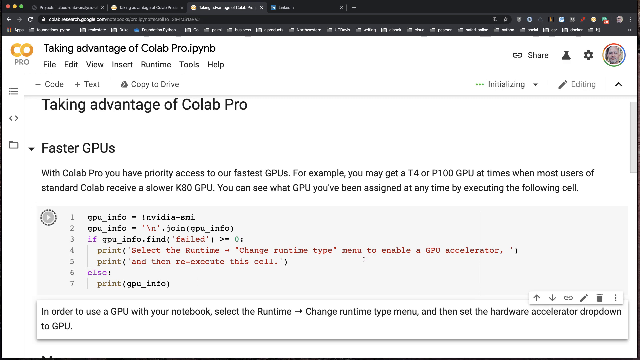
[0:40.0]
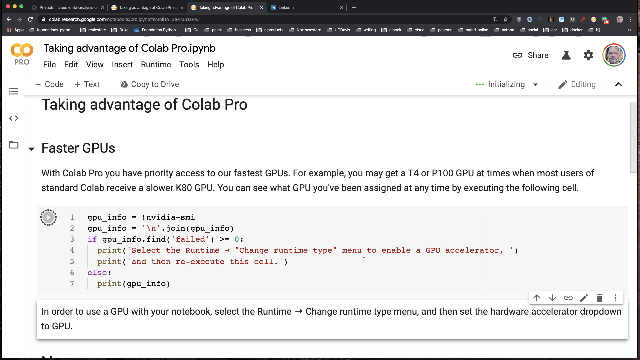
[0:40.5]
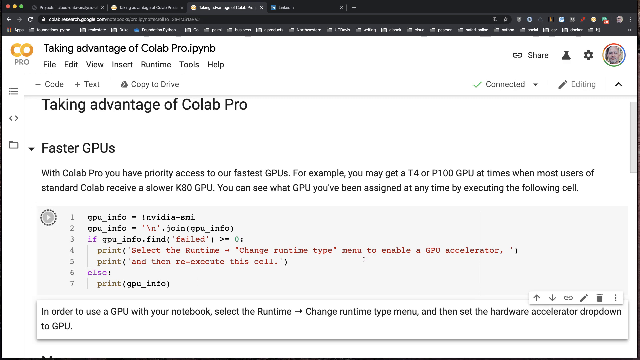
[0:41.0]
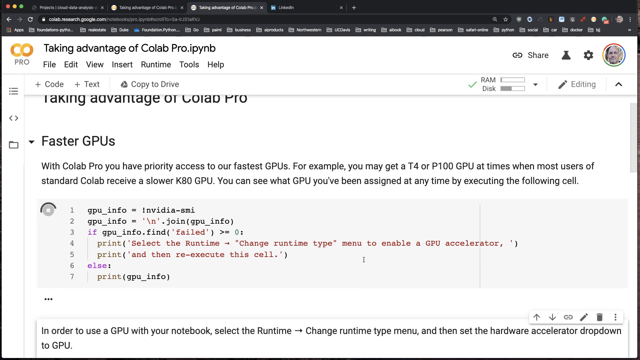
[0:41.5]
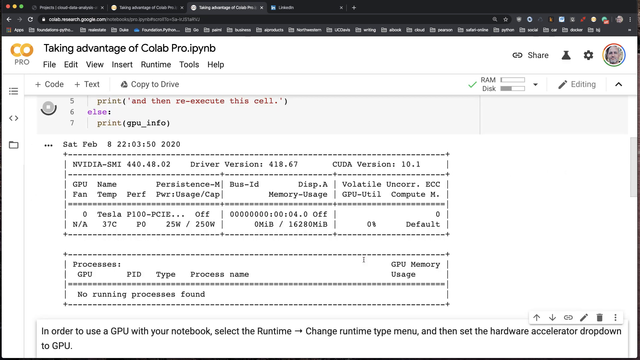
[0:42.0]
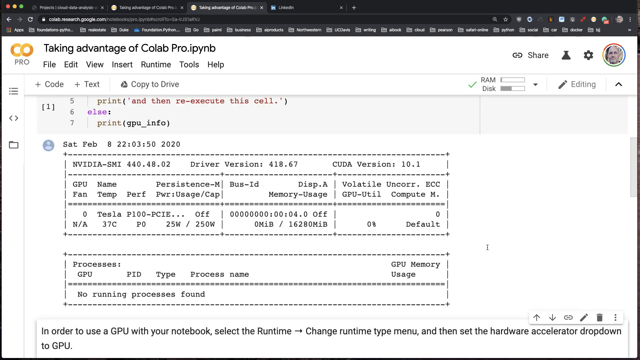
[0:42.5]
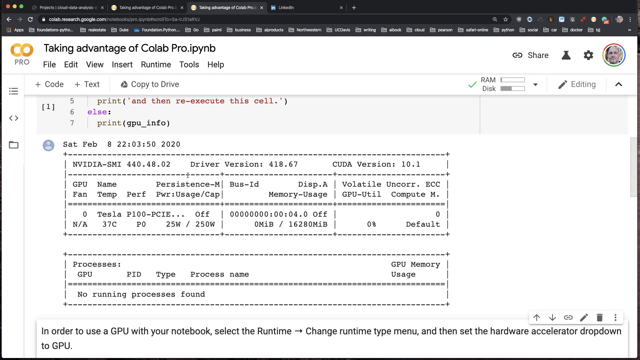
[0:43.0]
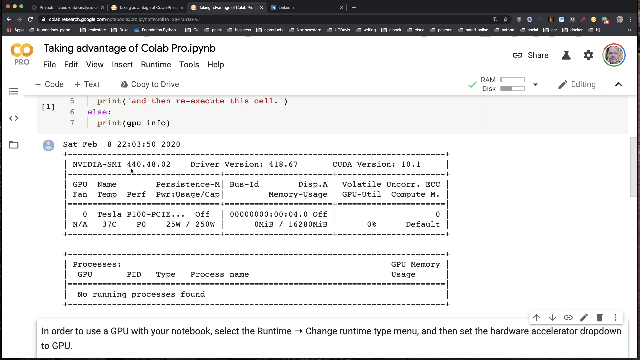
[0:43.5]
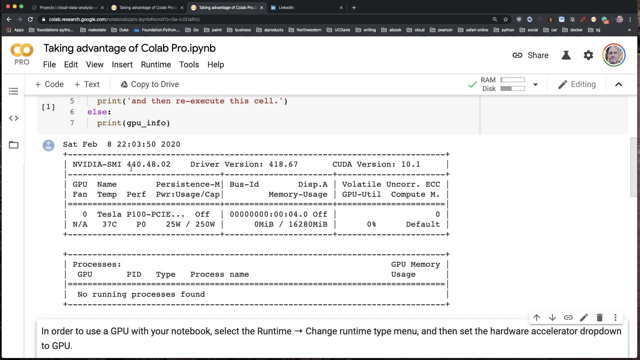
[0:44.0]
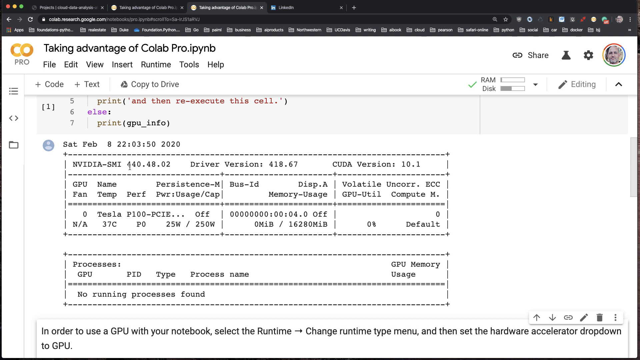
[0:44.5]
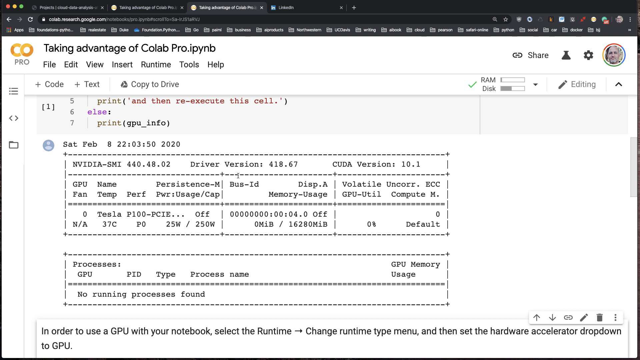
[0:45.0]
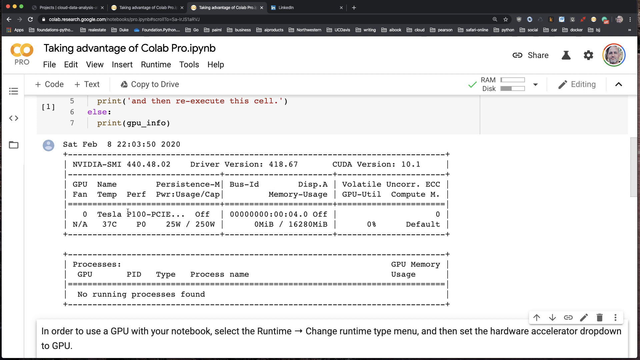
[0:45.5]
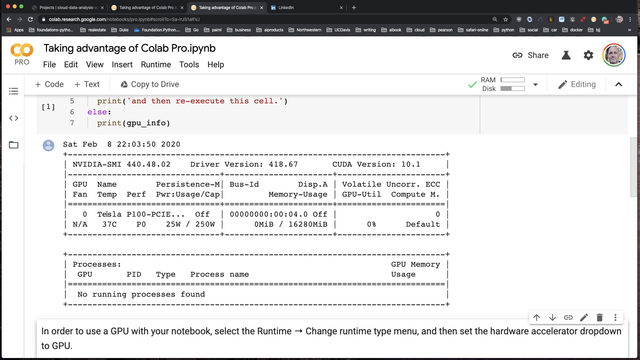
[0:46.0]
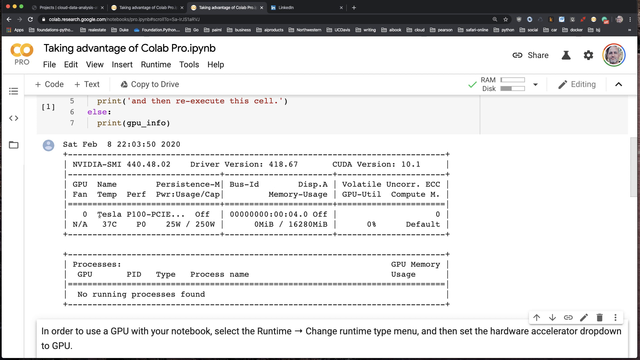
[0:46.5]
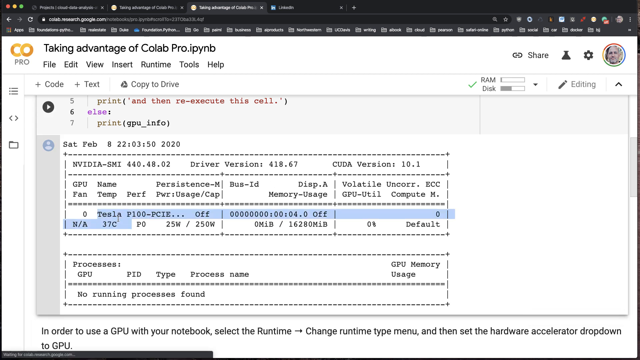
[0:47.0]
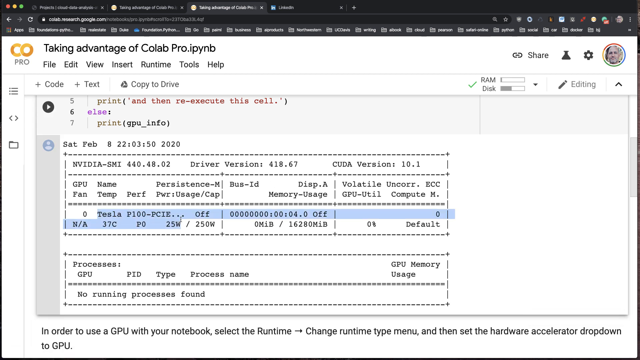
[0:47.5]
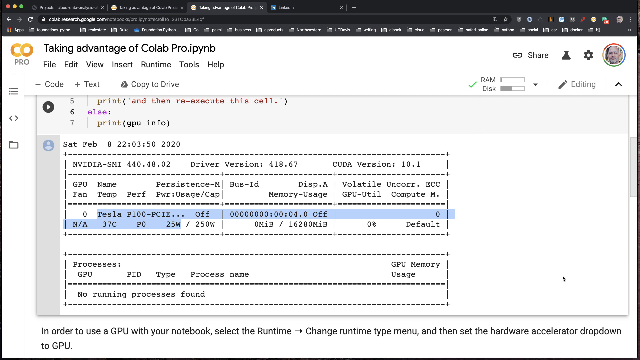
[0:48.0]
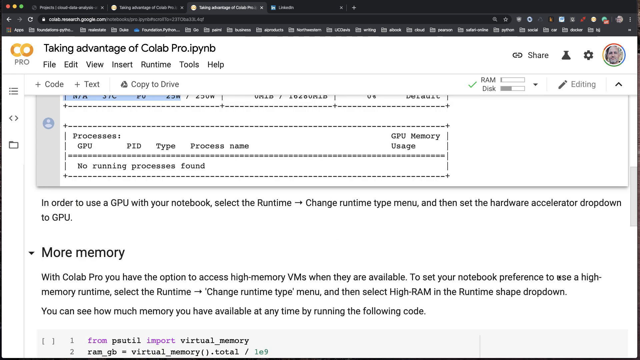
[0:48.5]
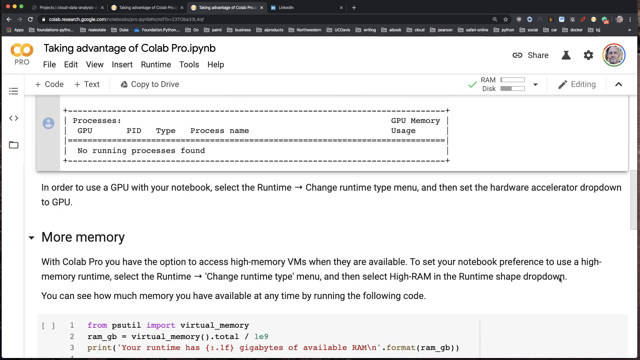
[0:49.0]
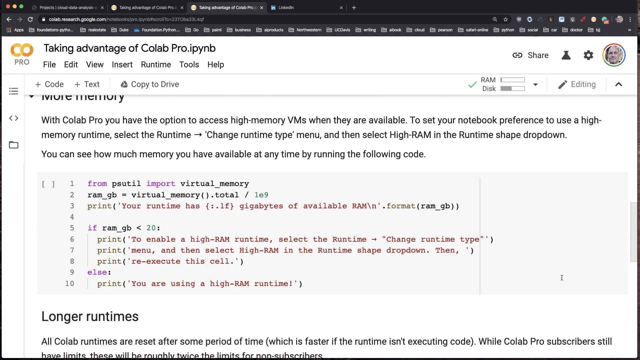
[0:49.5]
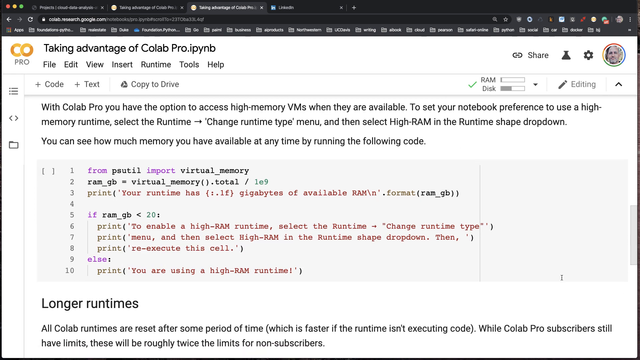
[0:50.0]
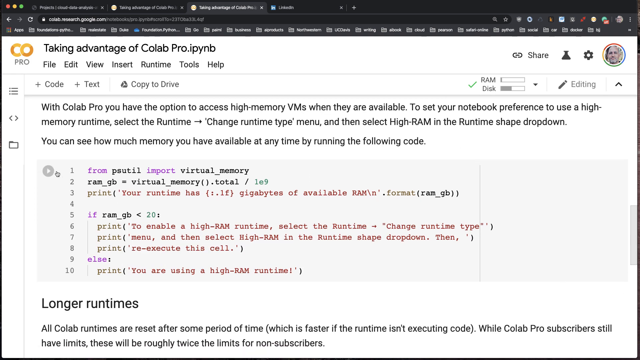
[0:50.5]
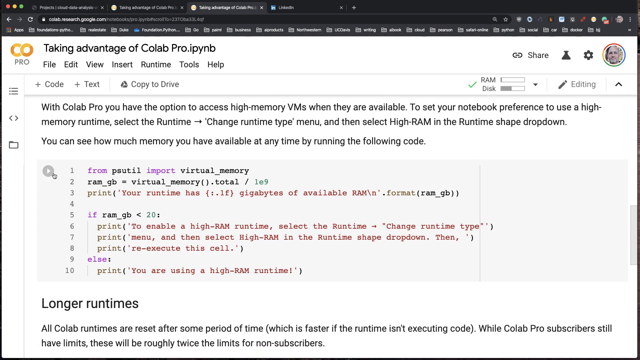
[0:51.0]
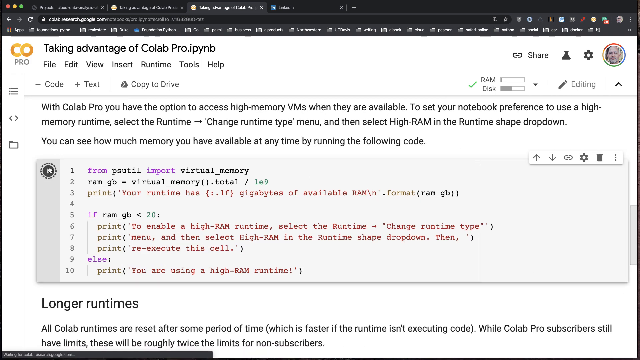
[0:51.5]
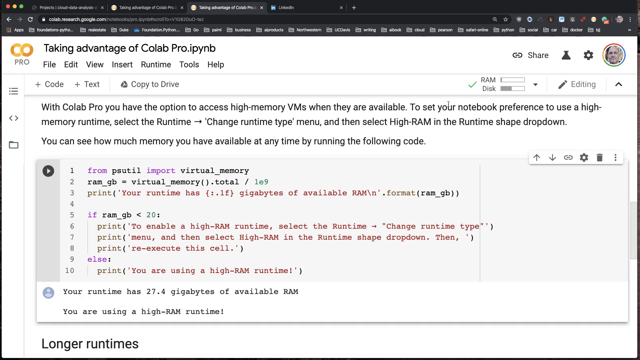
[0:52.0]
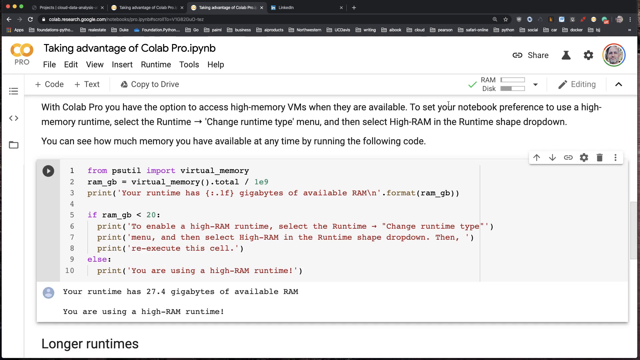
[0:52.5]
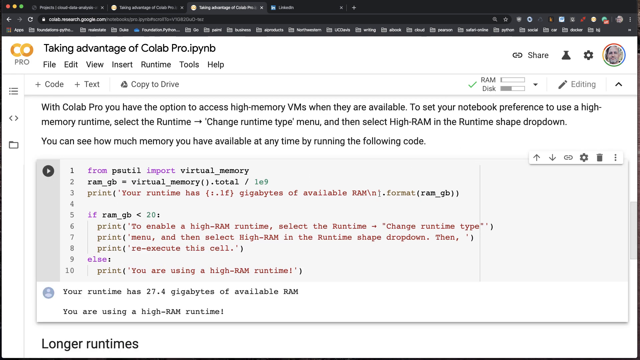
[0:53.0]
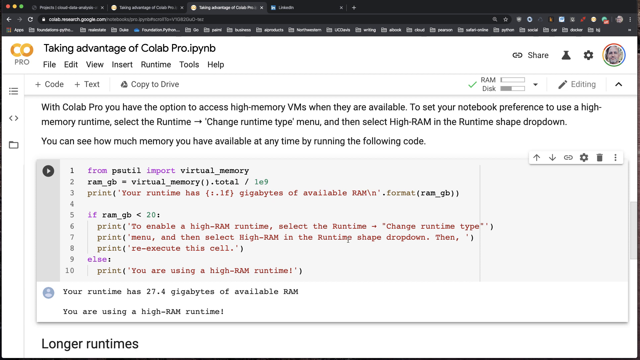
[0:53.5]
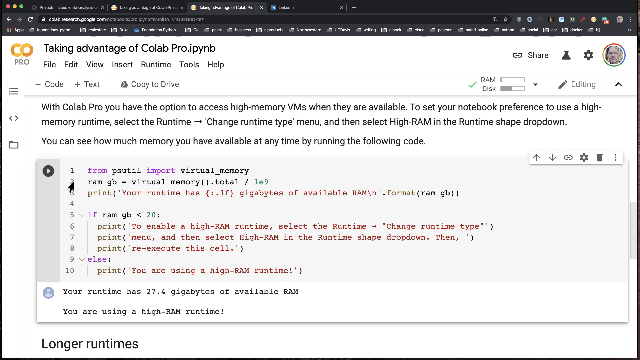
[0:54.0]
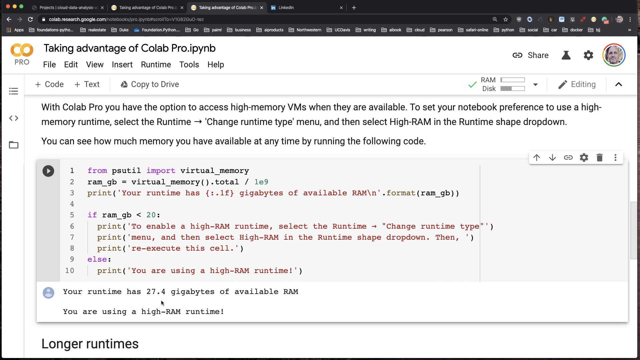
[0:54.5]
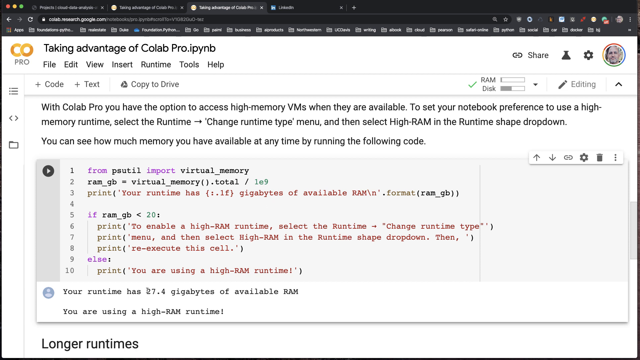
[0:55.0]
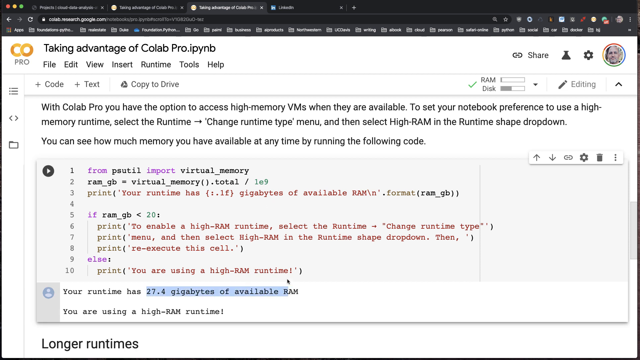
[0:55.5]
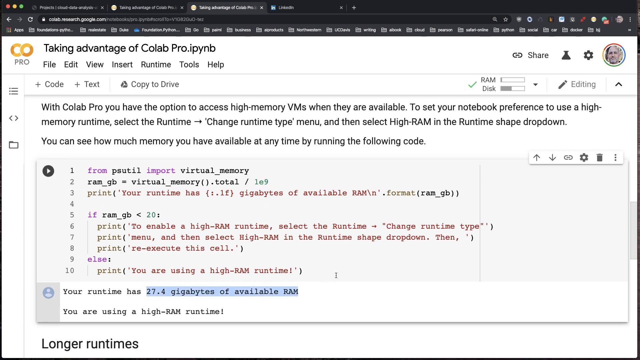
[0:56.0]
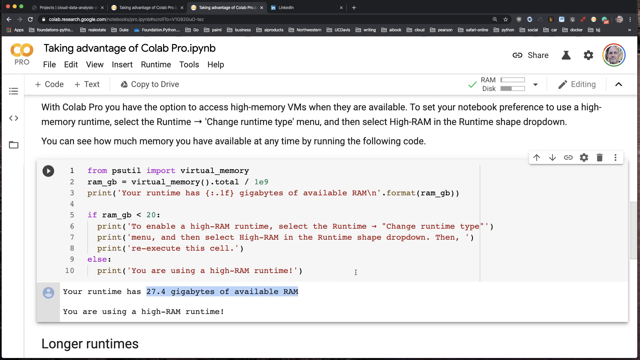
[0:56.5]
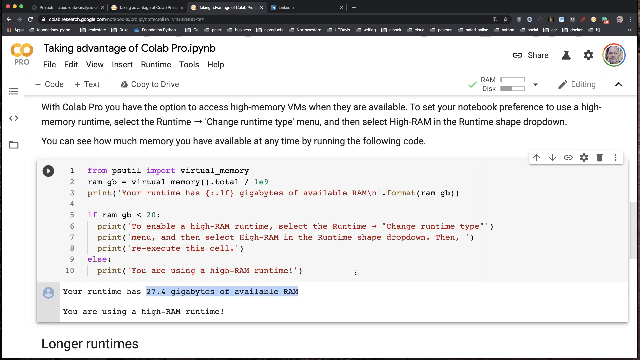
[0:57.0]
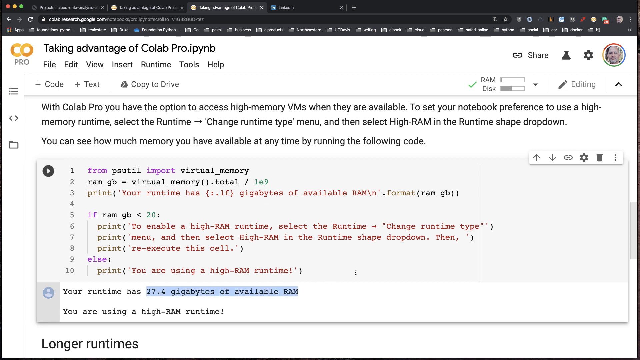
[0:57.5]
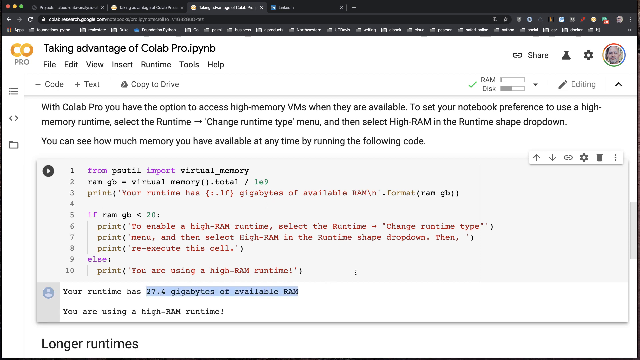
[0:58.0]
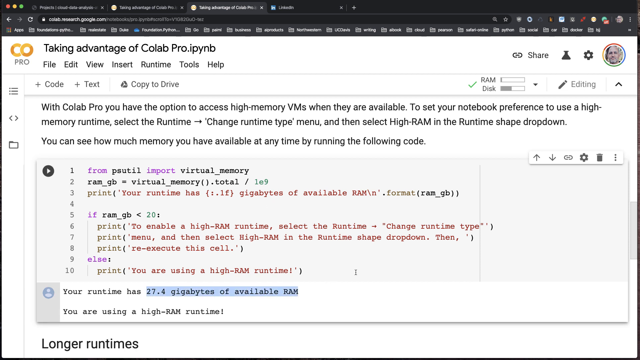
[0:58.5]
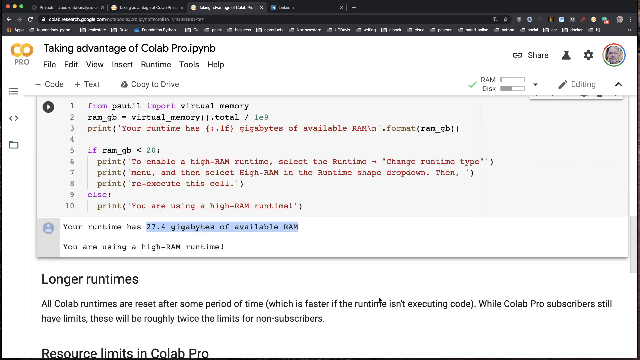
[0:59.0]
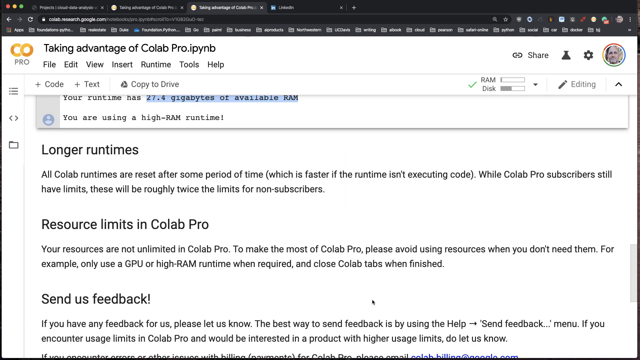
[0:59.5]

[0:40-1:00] The same features appear to be gone through, with some differences. The man highlights in blue what looks like a Tesla icon and something indicating that it is off. The layout resembles a code editor. Text reads "print and then re-execute this cell," along with code commands. Instructions read "with Colab Pro, you have the option to access high memory VMs when they're available, to set your notebook preference to use high memory runtime, select runtime, change runtime type menu, and then select high RAM in the runtime shape dropdown." Further text mentions runtime and "gigabytes available," "enable high RAM runtime," and "select runtime menu, and then select high RAM in the runtime shape dropdown menu." These are instructions for the settings the man was changing.